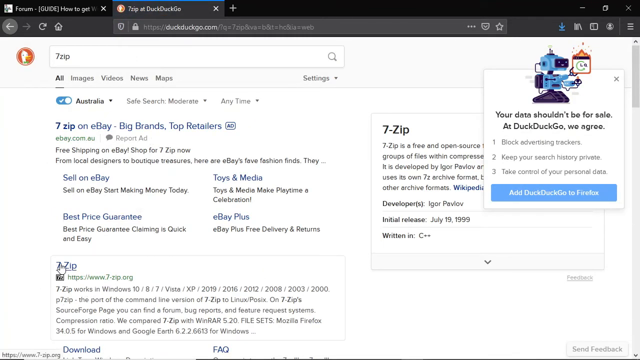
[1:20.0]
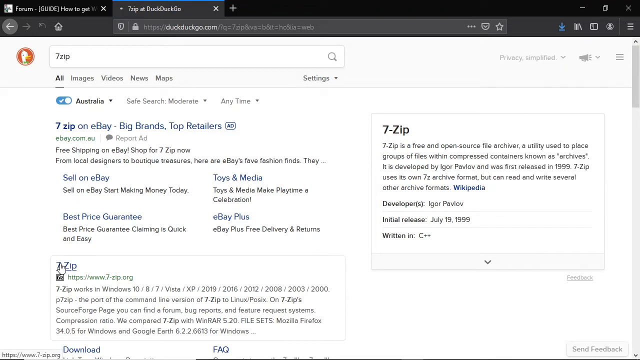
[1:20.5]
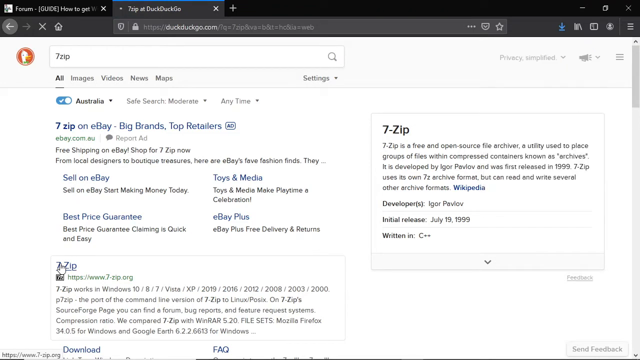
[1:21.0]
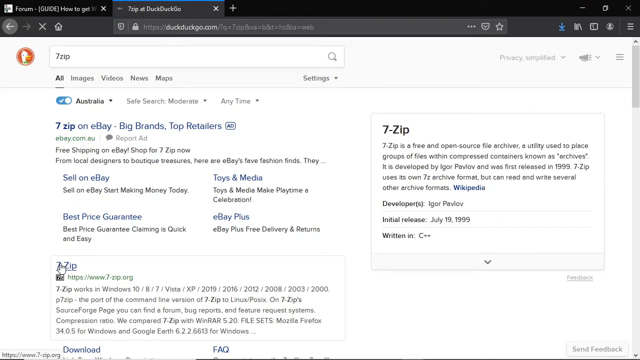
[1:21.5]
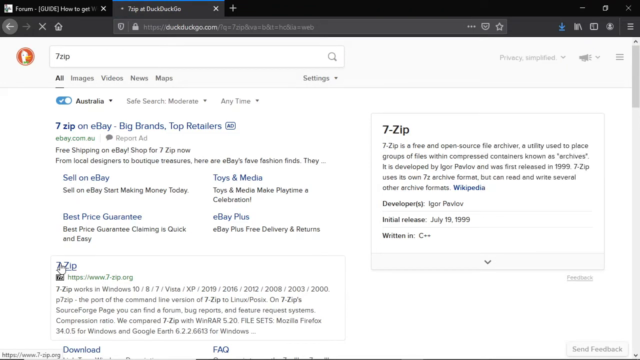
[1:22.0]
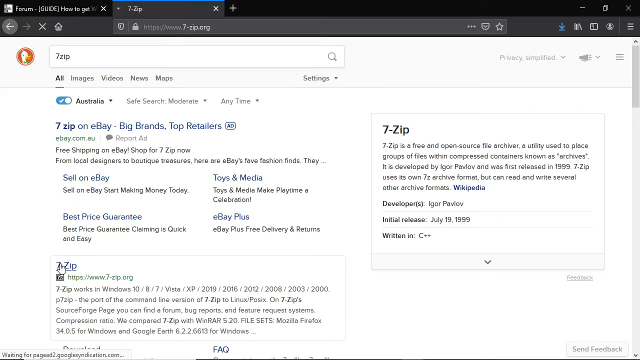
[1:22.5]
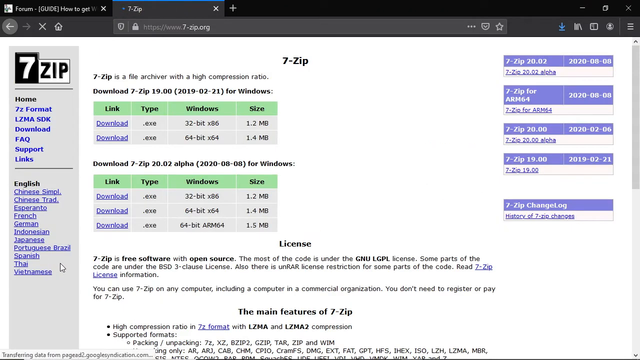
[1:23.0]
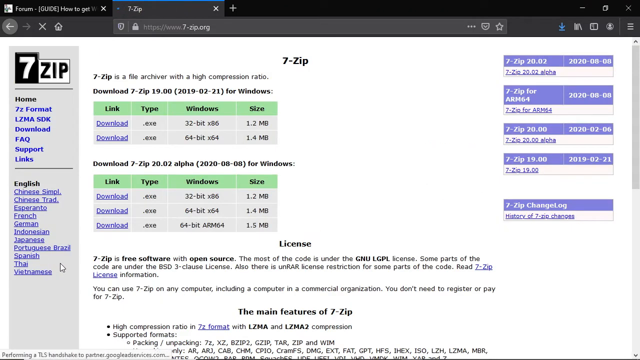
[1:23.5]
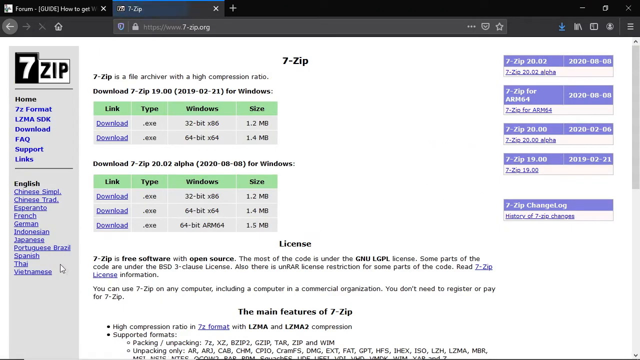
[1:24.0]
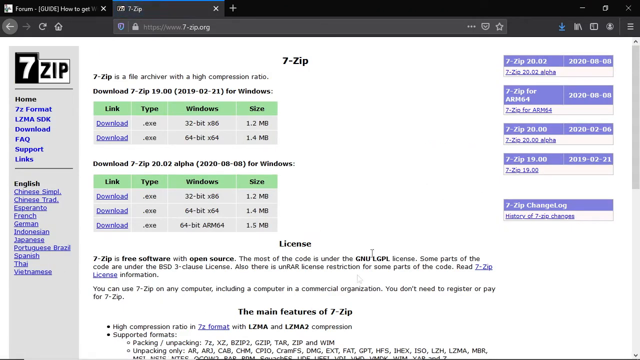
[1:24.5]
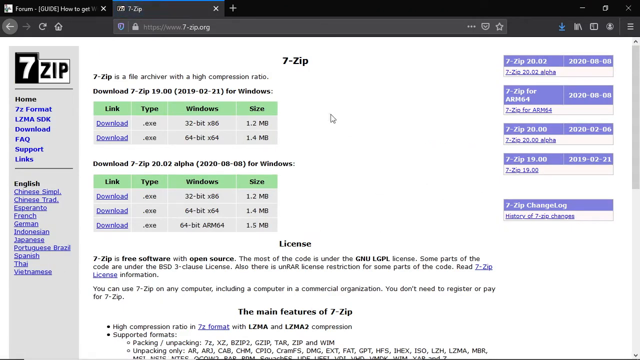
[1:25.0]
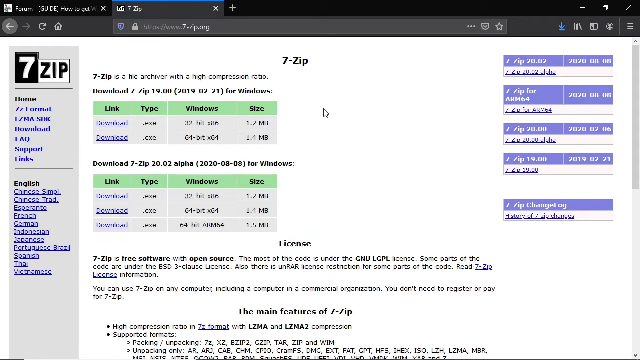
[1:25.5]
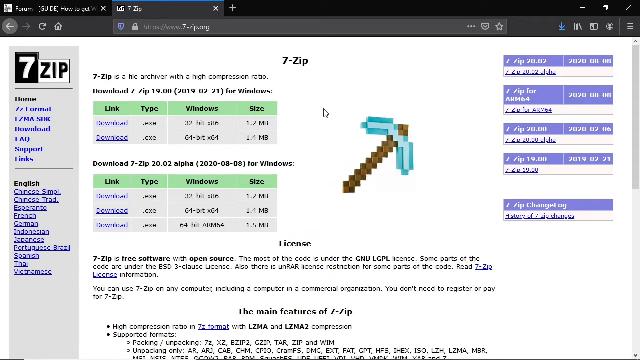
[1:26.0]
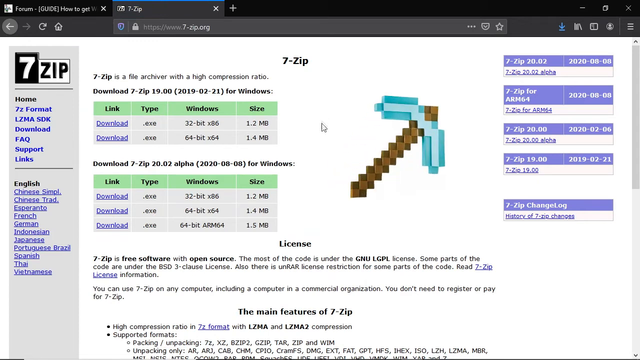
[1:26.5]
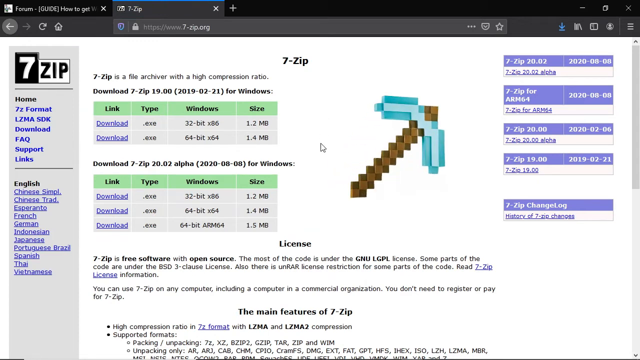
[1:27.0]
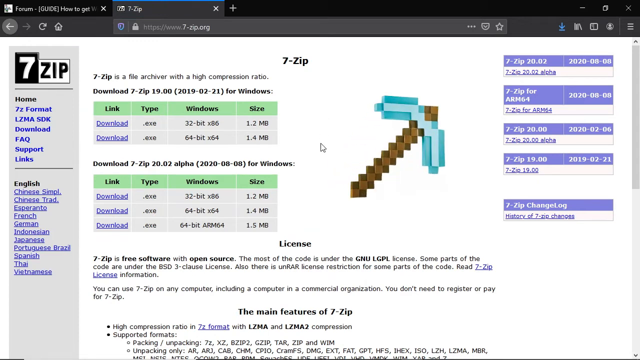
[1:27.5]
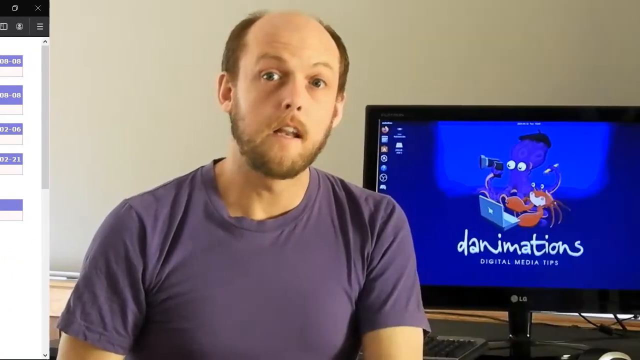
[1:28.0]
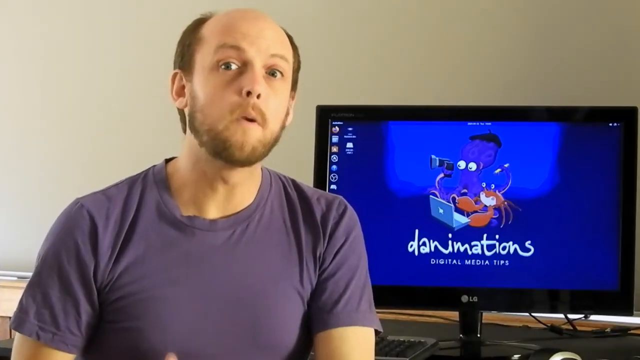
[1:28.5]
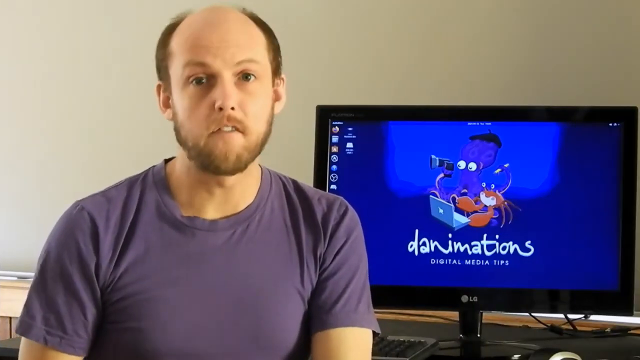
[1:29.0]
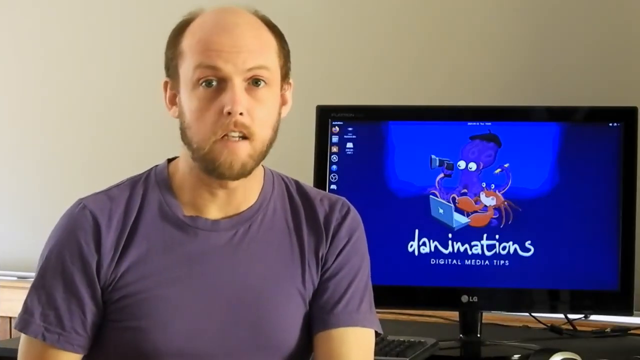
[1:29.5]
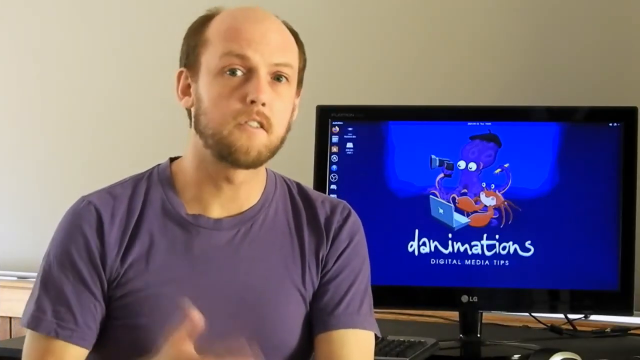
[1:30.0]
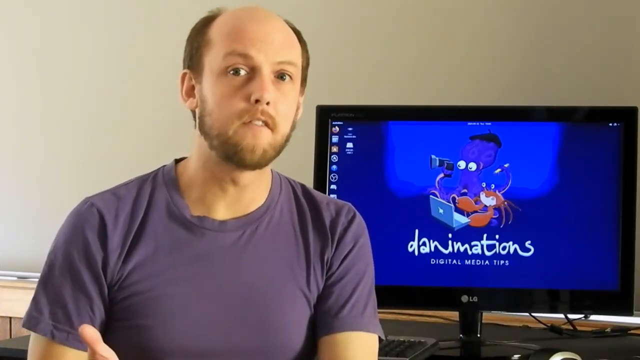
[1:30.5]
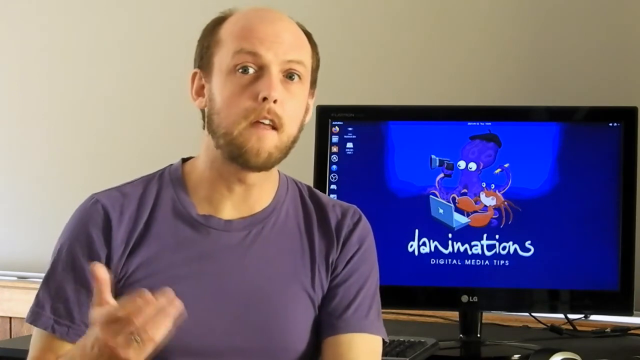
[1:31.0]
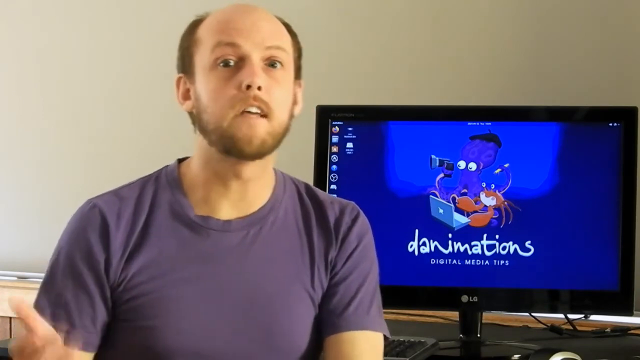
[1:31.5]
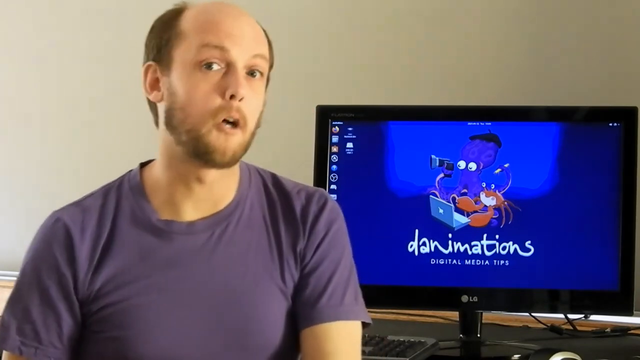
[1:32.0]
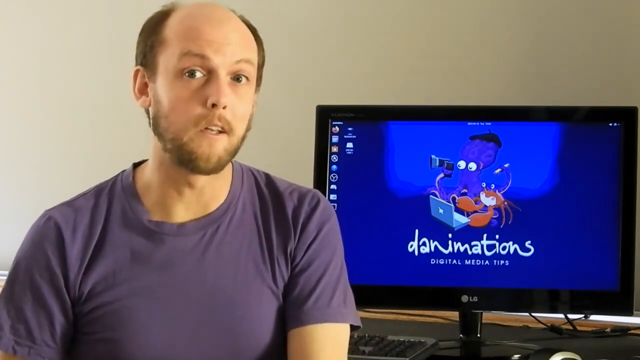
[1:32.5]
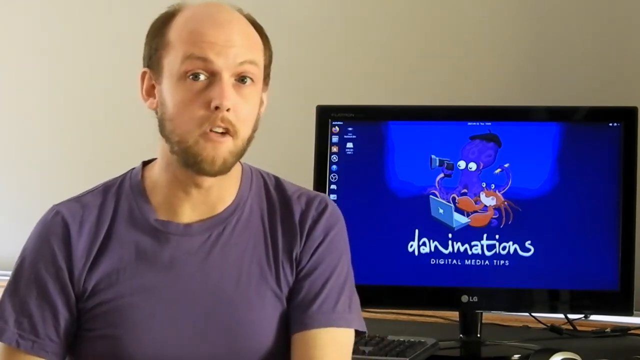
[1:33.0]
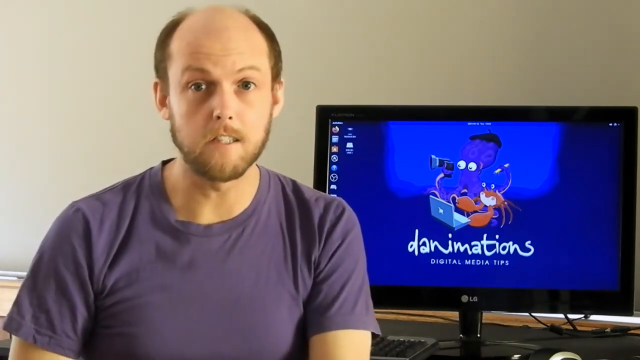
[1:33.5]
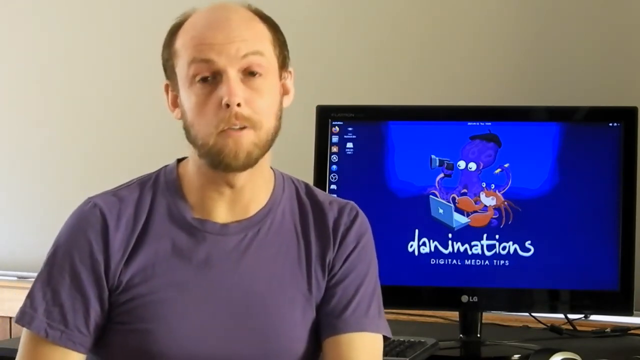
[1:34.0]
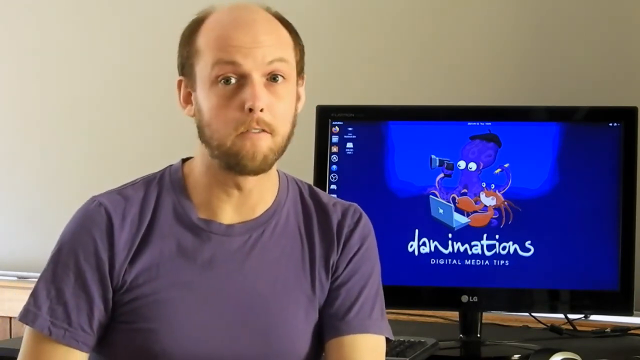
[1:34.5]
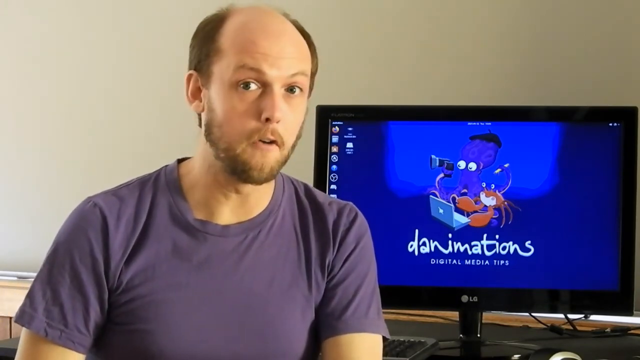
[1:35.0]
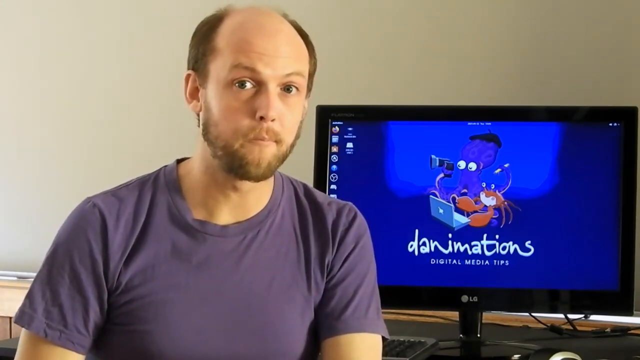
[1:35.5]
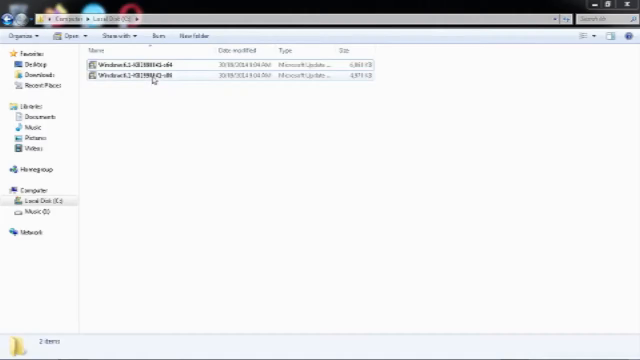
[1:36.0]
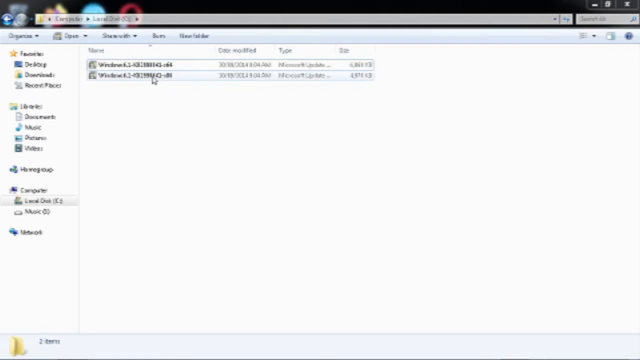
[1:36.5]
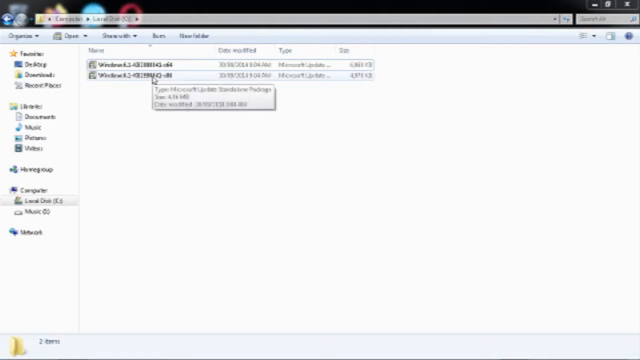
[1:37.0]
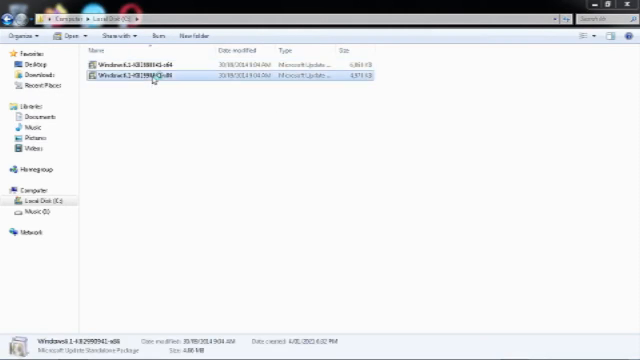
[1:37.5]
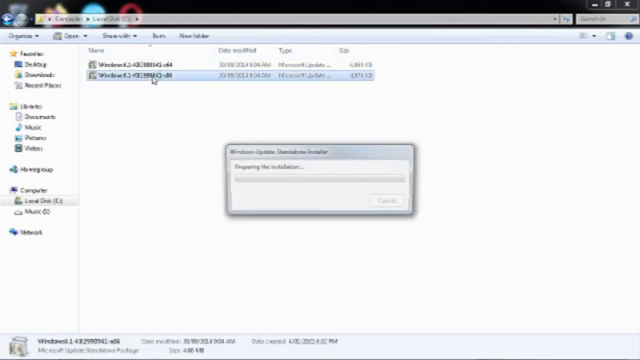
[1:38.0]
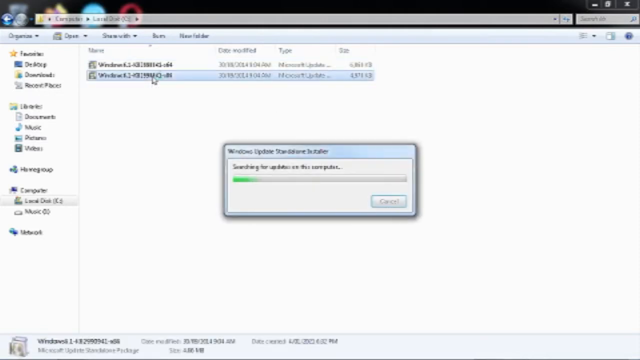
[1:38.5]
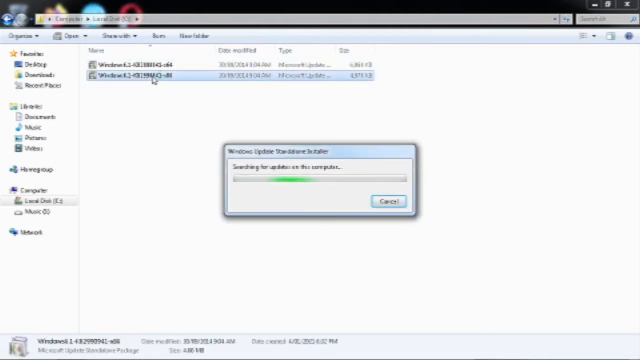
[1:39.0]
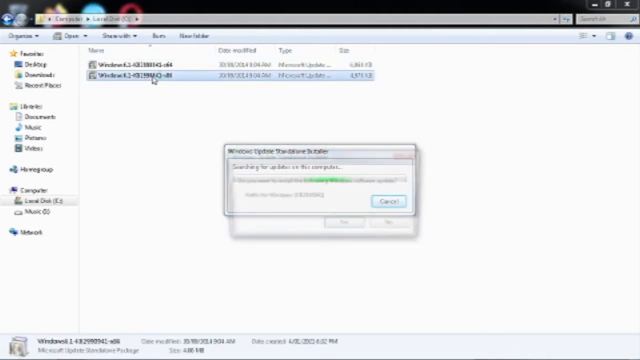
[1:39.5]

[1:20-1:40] In Google Chrome, the person has two tabs open. The second tab is on the DuckDuckGo search engine, with "7zip" typed into the search box and the results, apparently from the search, shown below. The person clicks the very first result, and the 7zip.org website opens. They move the cursor up, and a Minecraft mining pick comes onto the screen right in the center. The video then shows a man on the left-hand side, visible from the chest up. He is white, with reddish-brown hair and a full beard, is bald on the front, and wears a purple T-shirt. Behind him on the right is a monitor facing the viewer, with a black bezel, icons on the left, a blue background, and a cartoon squid and crab looking through a camera and a laptop above the text "Danimations."